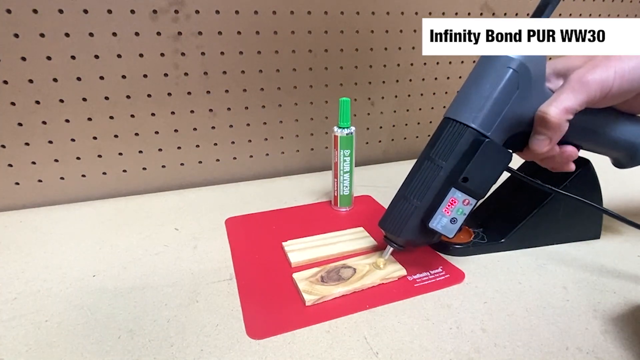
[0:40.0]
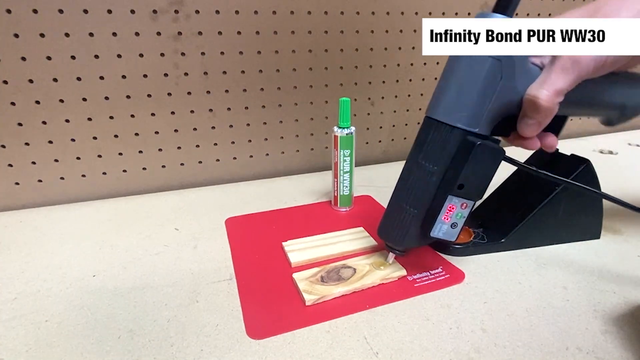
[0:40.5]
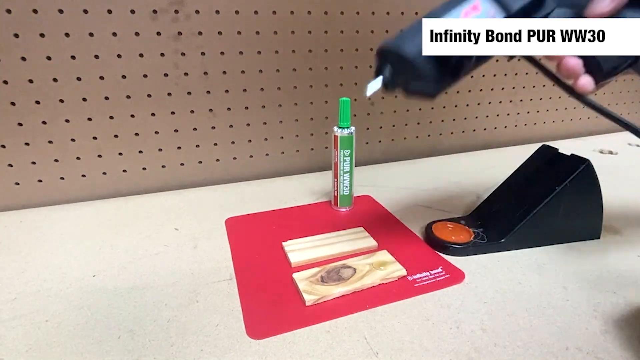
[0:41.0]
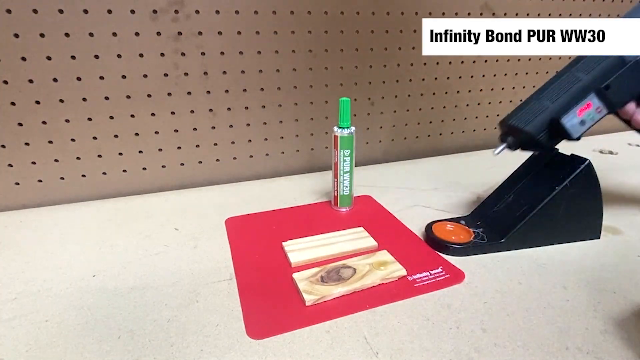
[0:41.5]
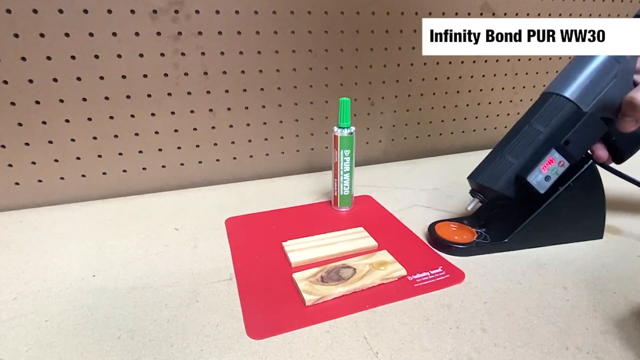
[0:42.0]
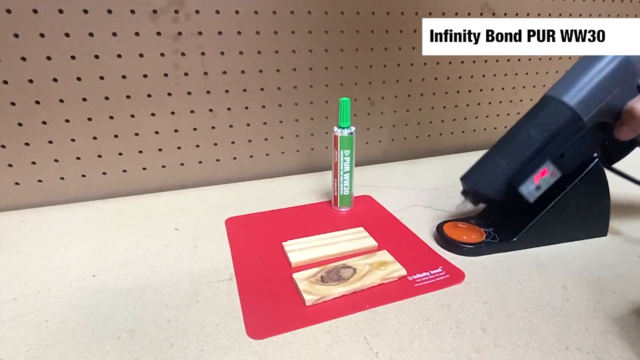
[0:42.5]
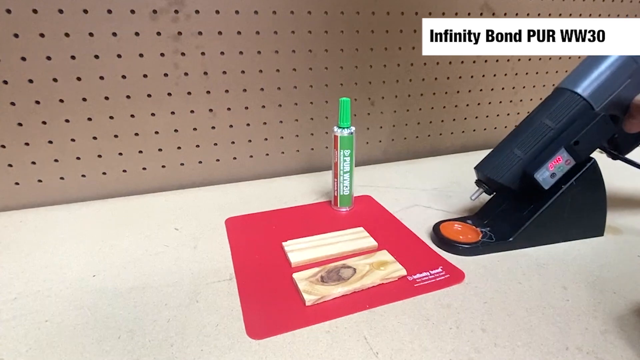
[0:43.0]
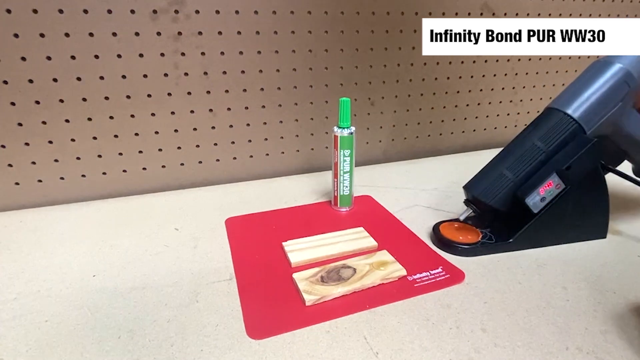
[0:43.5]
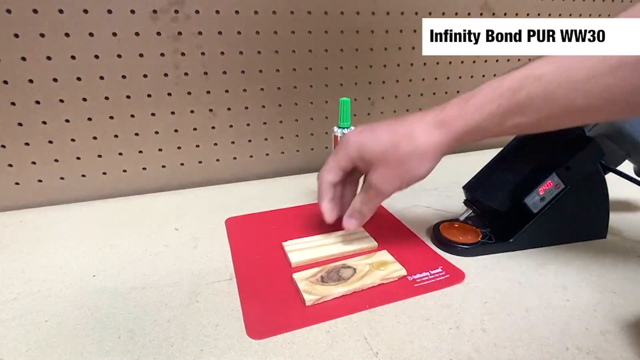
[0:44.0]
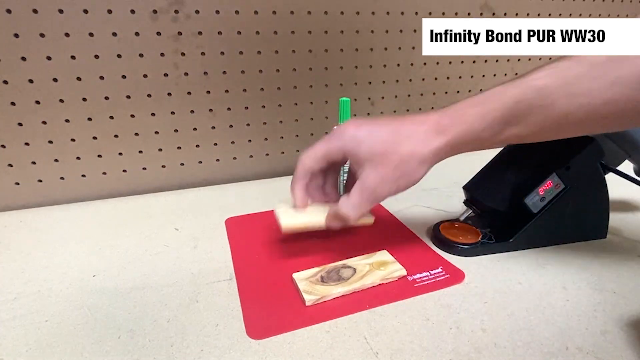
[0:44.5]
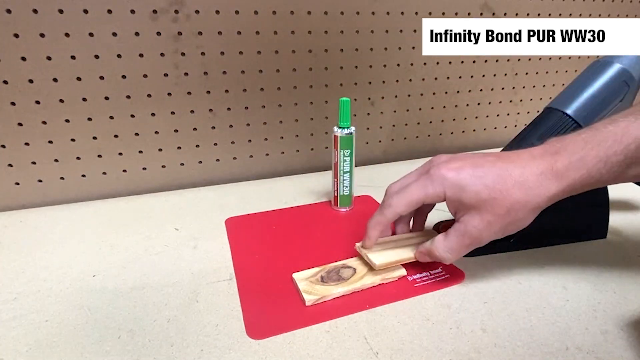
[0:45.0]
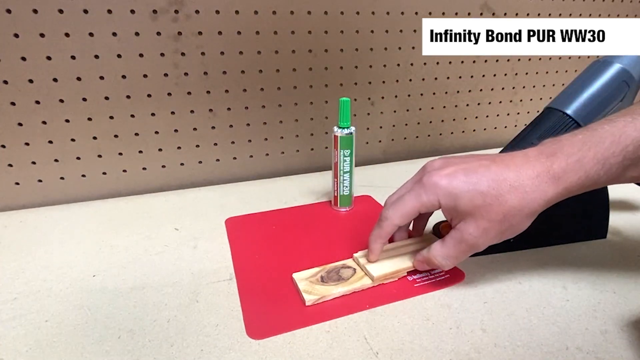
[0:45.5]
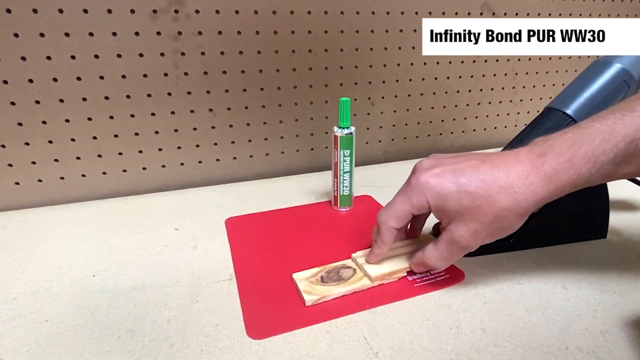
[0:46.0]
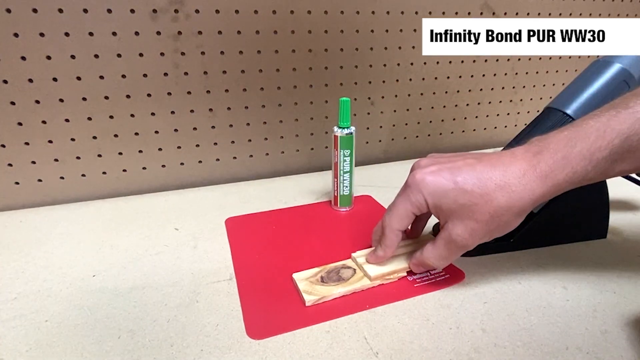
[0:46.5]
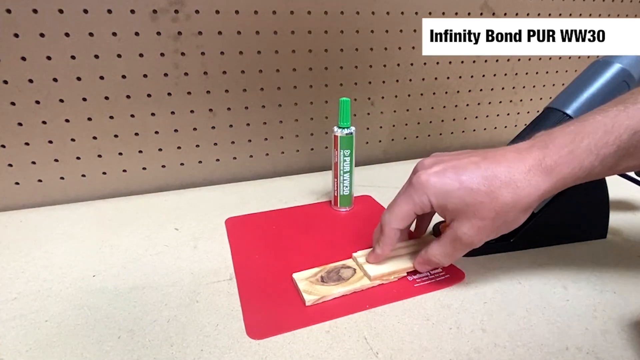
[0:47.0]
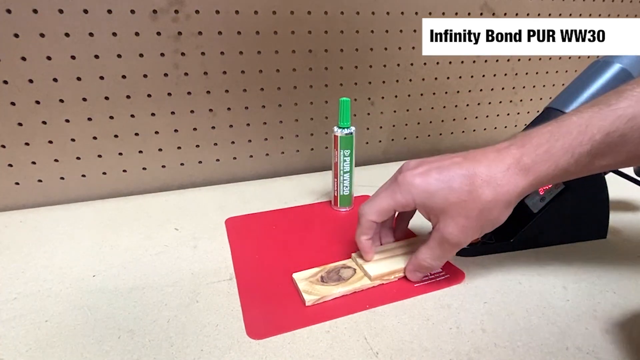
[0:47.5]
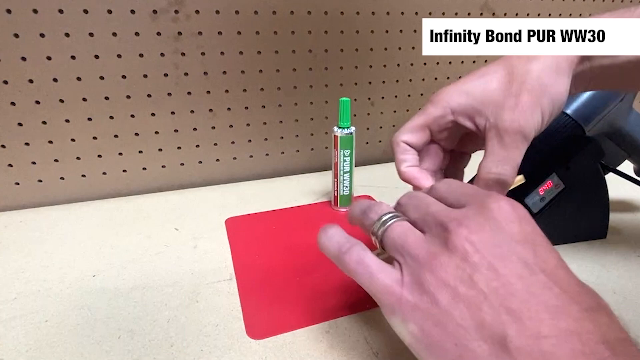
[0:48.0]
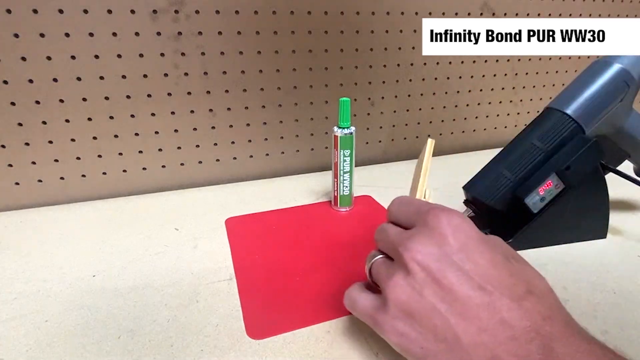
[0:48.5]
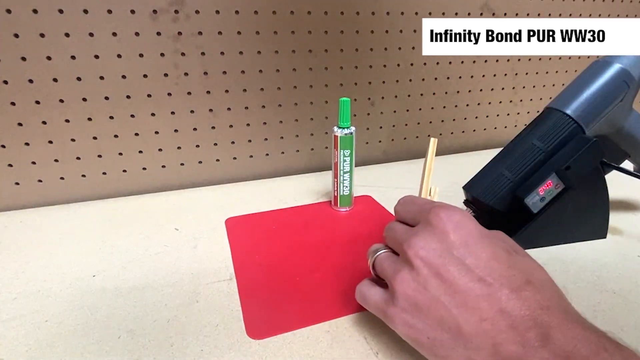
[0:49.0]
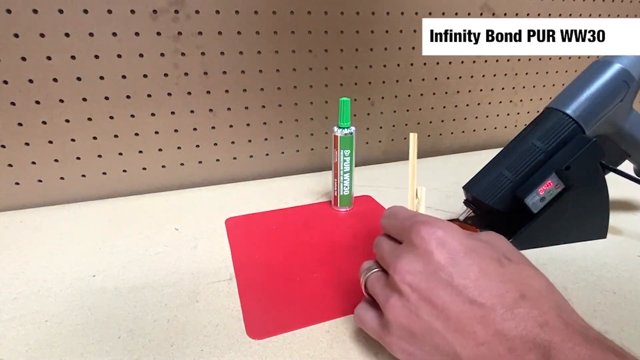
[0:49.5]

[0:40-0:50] A person demonstrates a tube of PUR glue adhesive, the Infinity Bond PUR WW30. They squirt a small dollop of it onto a piece of wood on a red mat, then place a dry piece of wood on top over the dot of glue so the two form a step-like shape, with half of one piece overlapping the other. After delivering the glue, the person places the hot glue gun back on its stand; a cord comes out of the gun. In the background is a board with a grid of dots, and the green tube of PUR WW30 is prominently displayed.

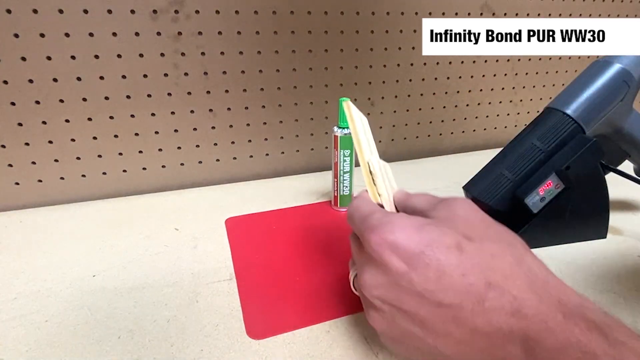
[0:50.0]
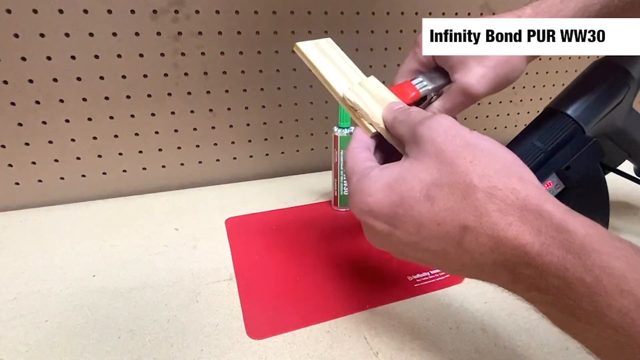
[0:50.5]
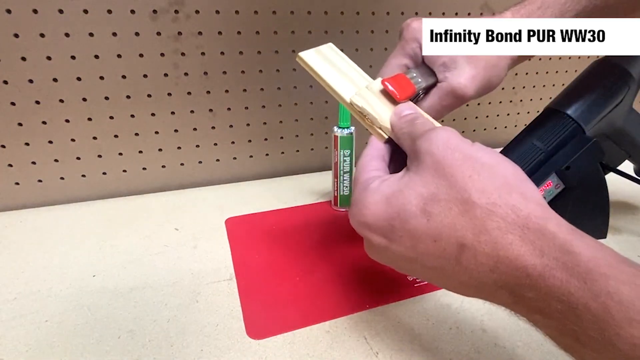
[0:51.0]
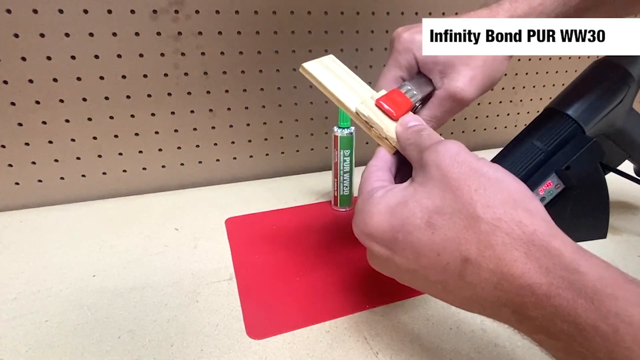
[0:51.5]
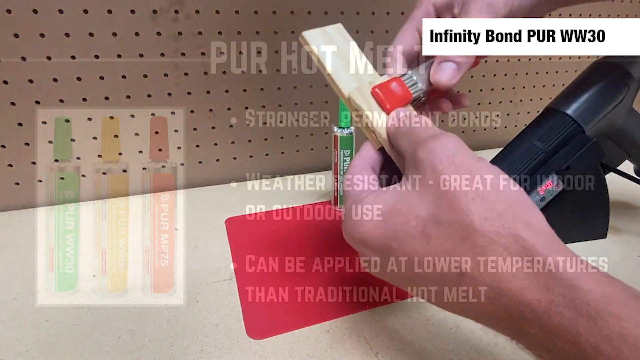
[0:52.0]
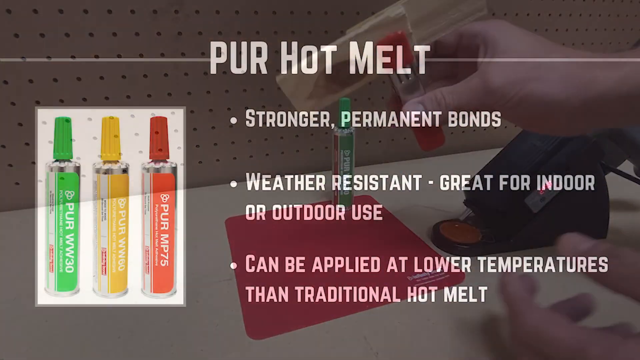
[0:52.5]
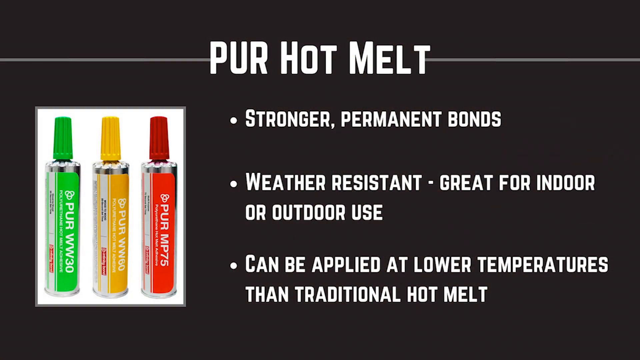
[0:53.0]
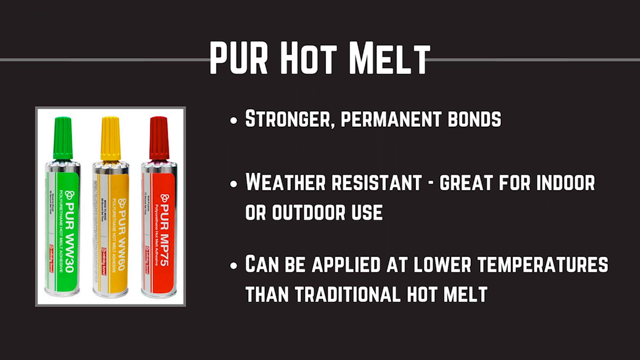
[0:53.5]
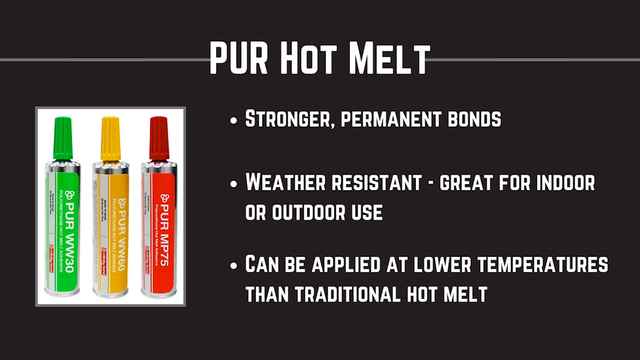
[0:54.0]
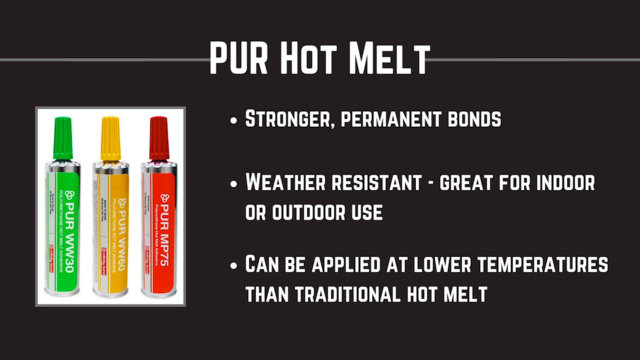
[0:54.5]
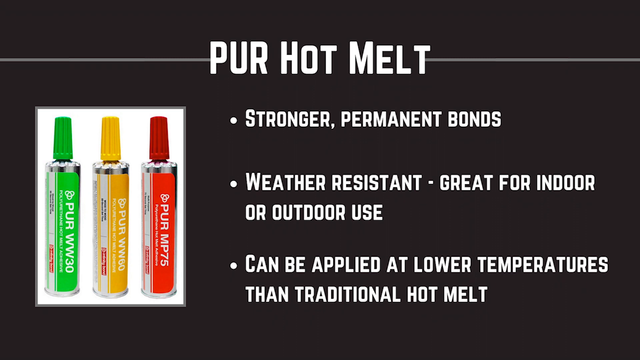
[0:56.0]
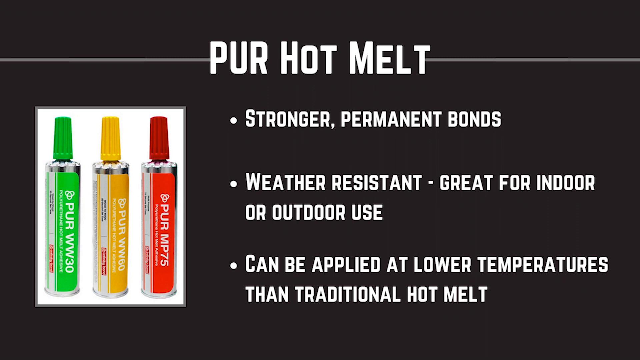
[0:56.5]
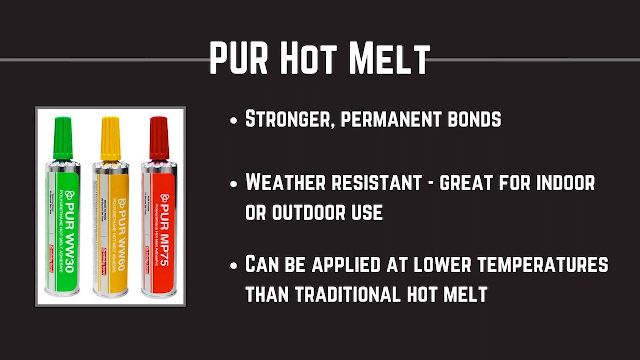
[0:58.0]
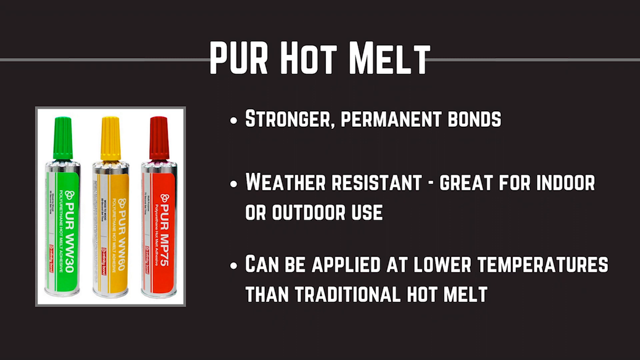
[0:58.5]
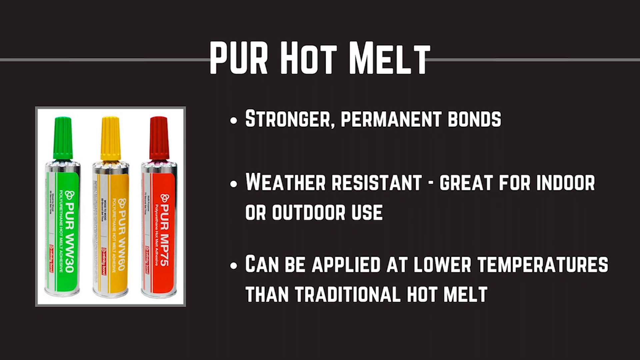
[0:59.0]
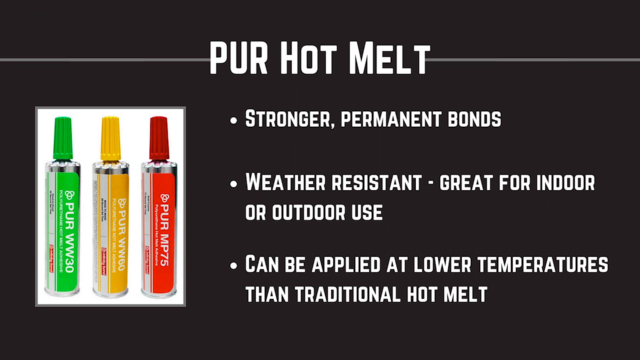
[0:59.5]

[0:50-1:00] Someone clamps two pieces of wood together after applying a drop of WW30 PUR hot melt glue. A static slide then presents the benefits of PUR hot melt, which comes in three coloured tubes: red, yellow and green. On the right side of the screen are three bullet points: "stronger permanent bonds", "weather resistant, great for indoor and outdoor use" and "can be applied at lower temperatures than traditional hot melt". On the left side of the slide, the three tubes stand upright against a white background.